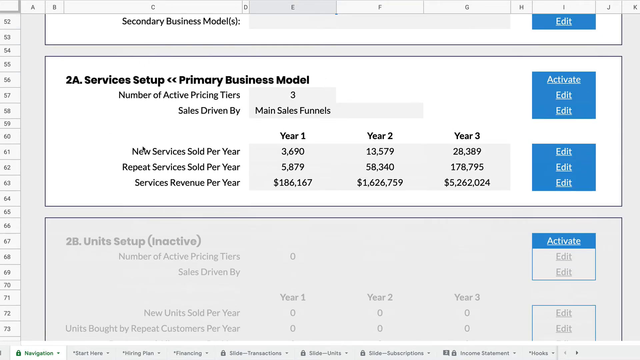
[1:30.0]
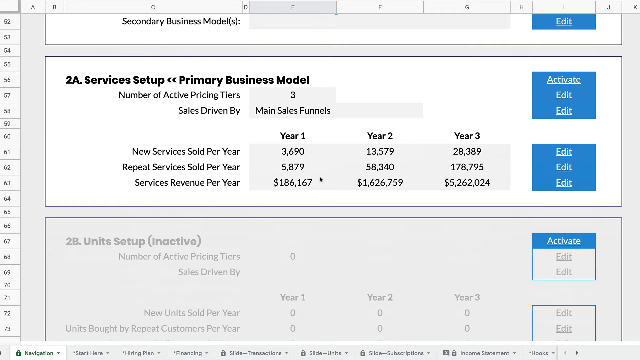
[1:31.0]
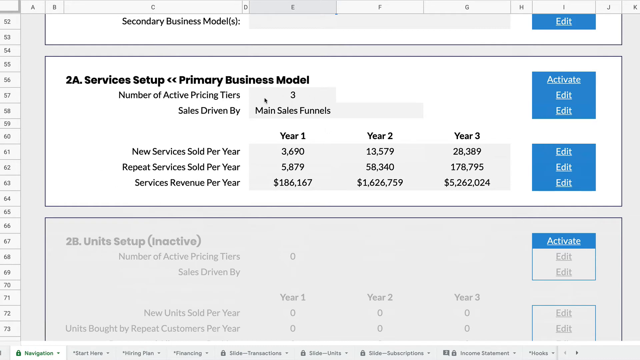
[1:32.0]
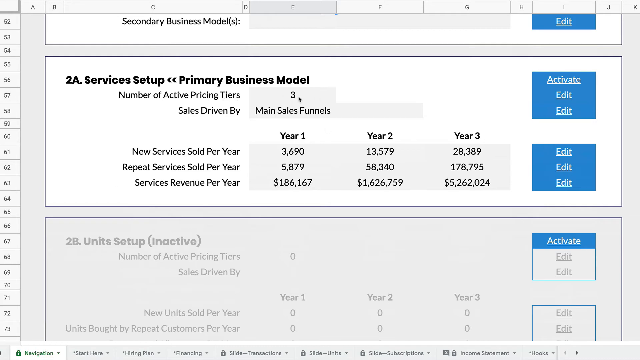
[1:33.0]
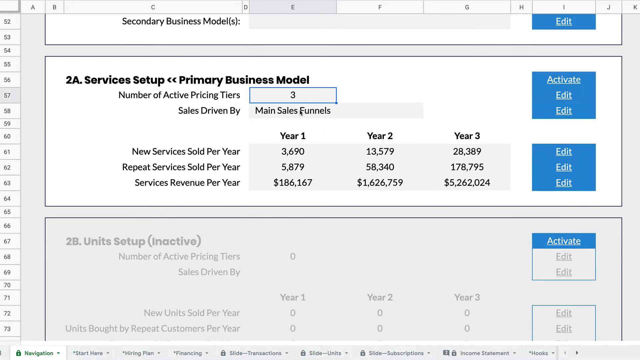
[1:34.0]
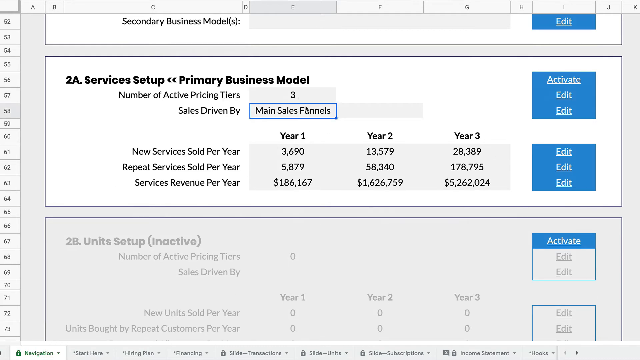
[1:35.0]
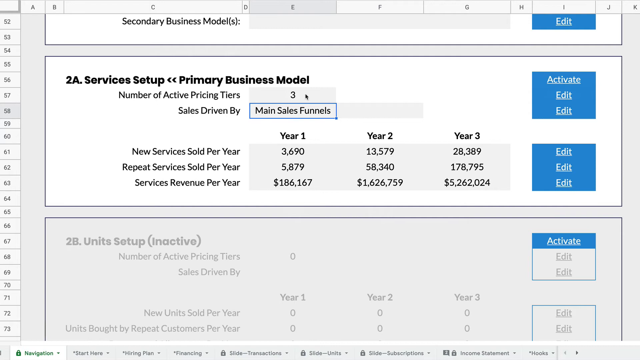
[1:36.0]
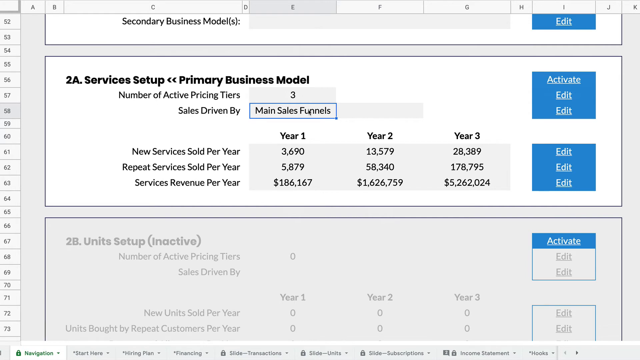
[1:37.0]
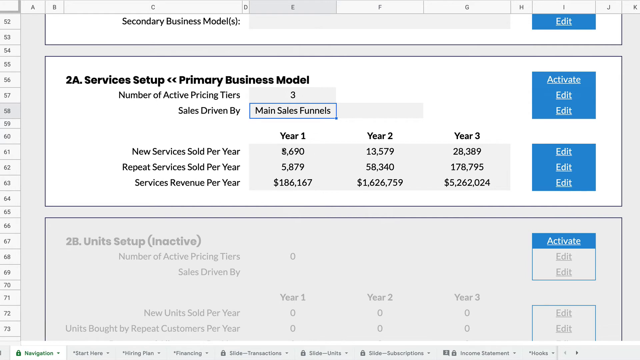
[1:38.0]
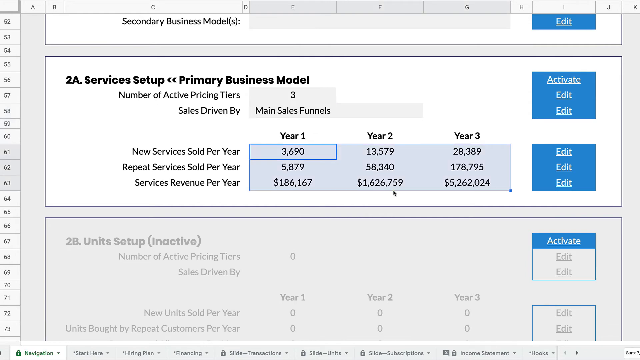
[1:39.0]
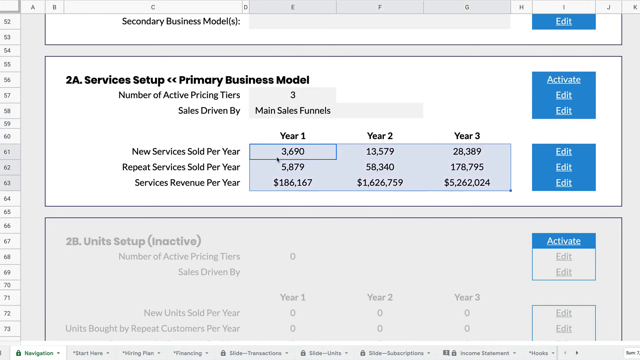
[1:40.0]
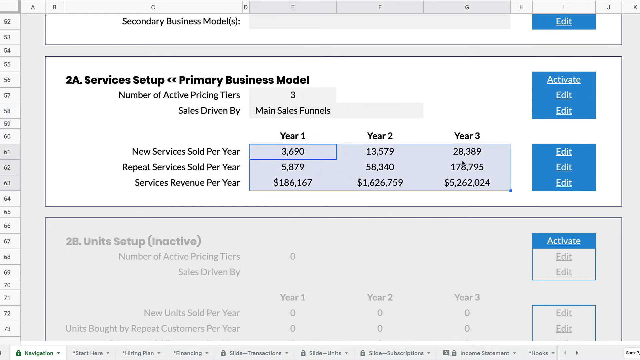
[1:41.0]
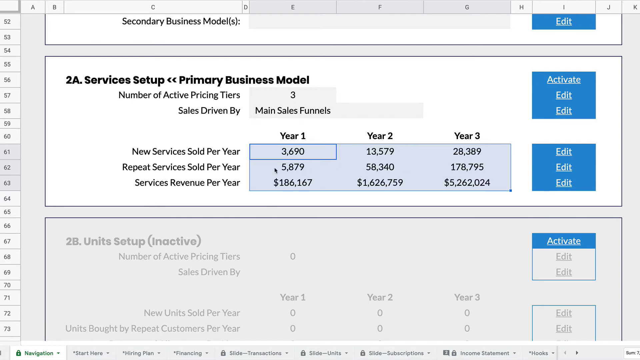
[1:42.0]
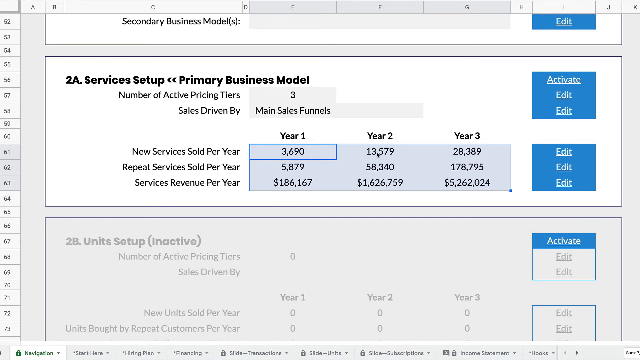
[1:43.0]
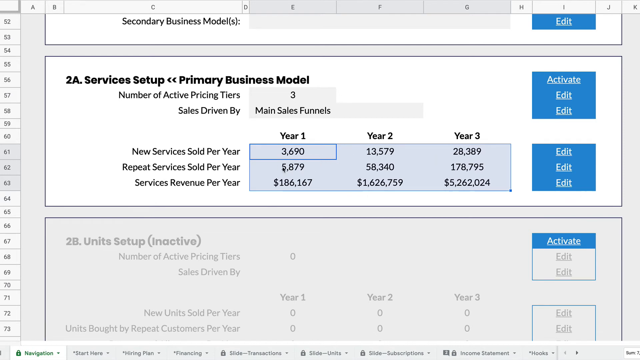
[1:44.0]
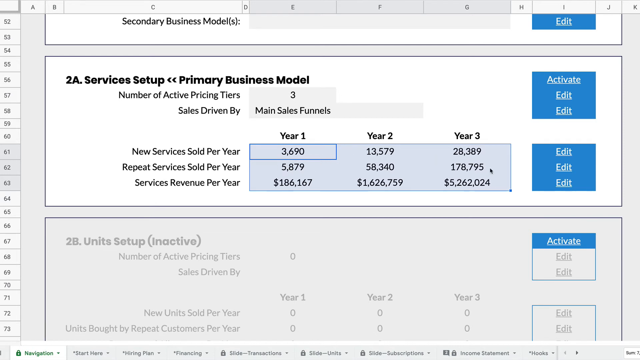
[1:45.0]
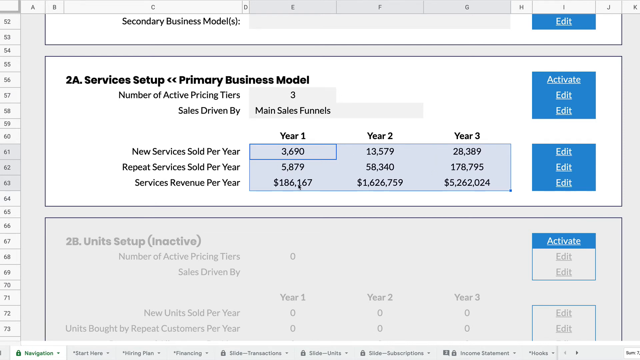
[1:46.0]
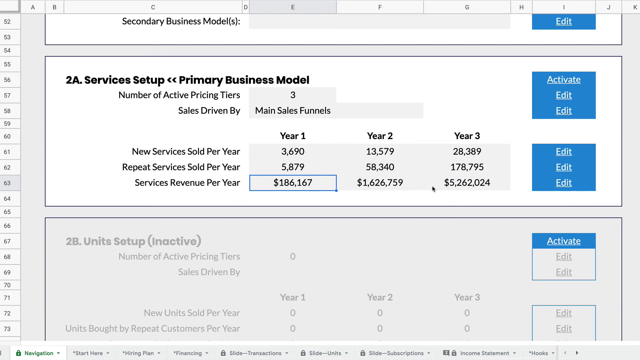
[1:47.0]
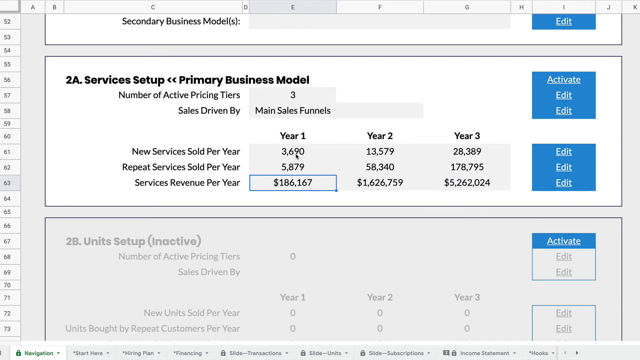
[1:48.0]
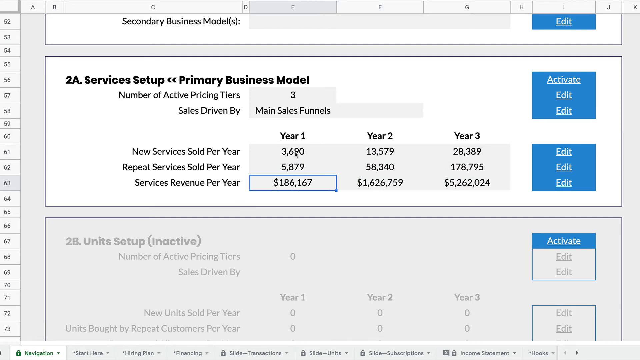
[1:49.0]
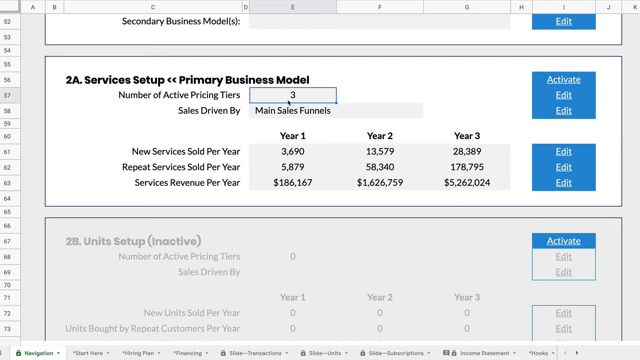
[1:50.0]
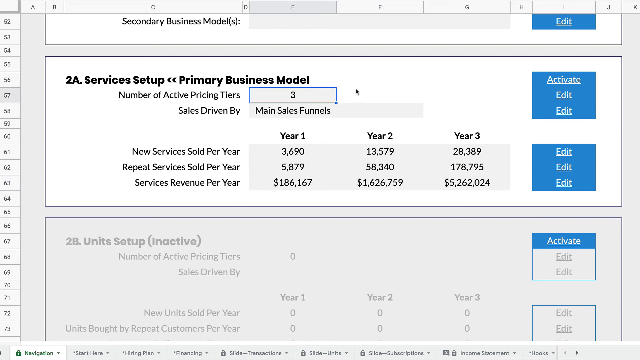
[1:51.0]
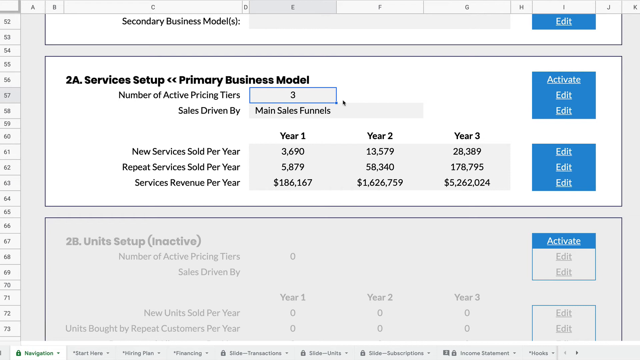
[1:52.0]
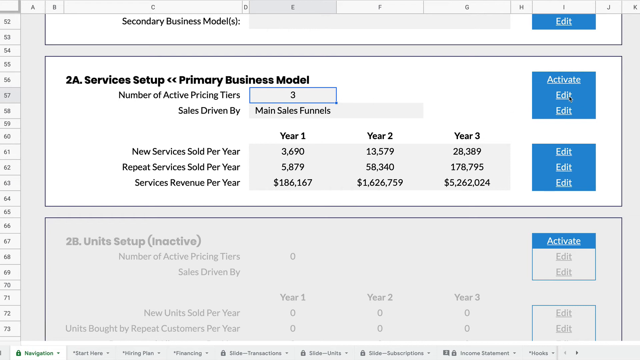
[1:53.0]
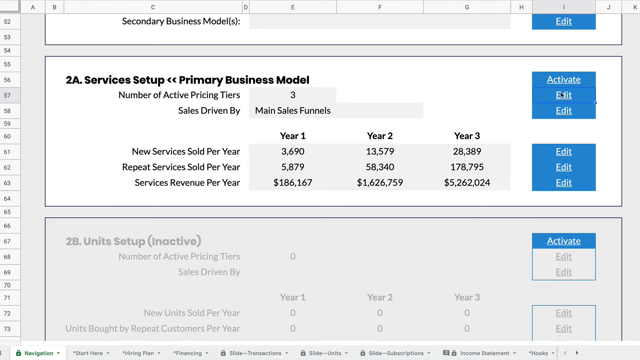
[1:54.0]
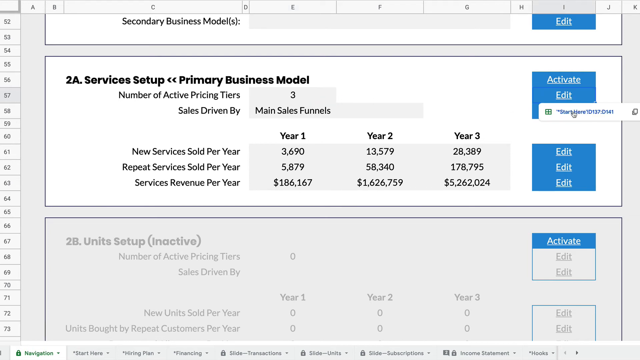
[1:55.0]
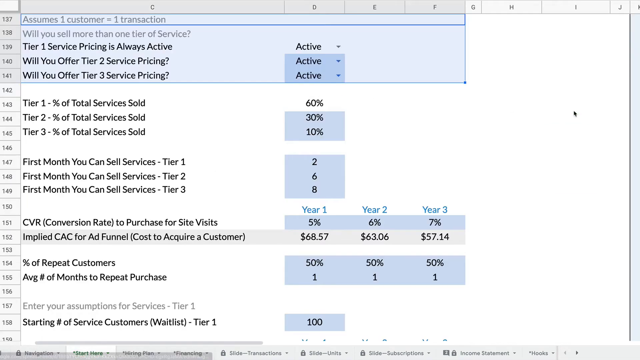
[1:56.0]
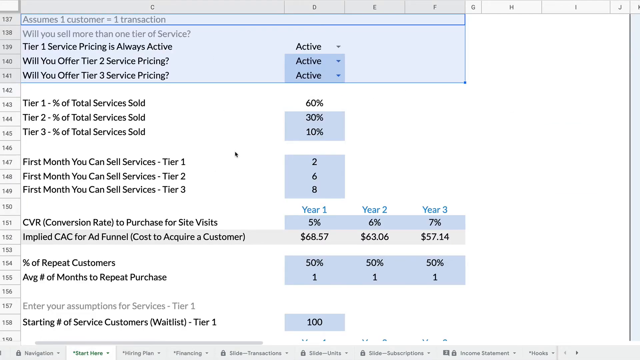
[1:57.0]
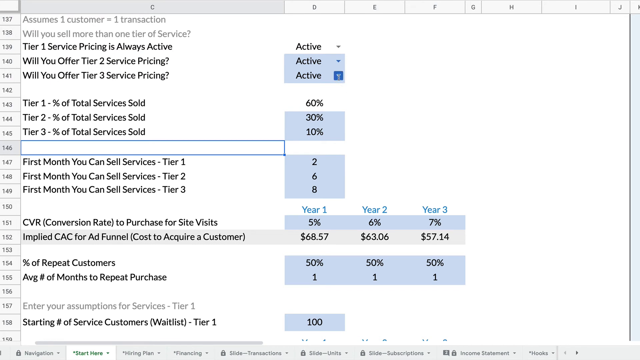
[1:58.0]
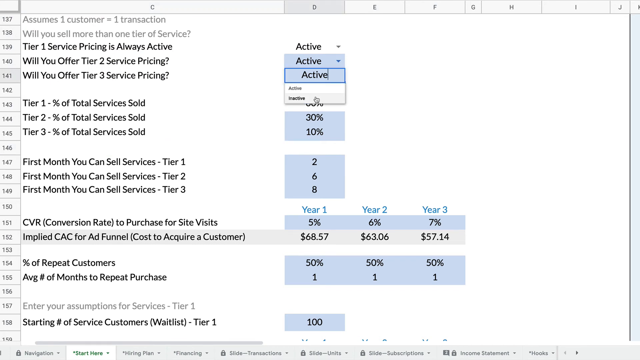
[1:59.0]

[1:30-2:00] On Services Setup, Primary Business Model, the man clicks on three, then on Sales Driven By, then on the various year options, scrolling through price points that differ per year. He goes back up to Active Pricing, clicks the Edit button labeled Start Here, and a different page opens showing "Tier 1 Service Pricing is always active," with dropdown menus on the side marked Active, and the questions "Will you offer Tier 2 Service Pricing?" and "Will you offer Tier 3?" Percent of total services sold reads 60 for Tier 1, 30 for Tier 2, and 10 for Tier 3. A row for the first month you can sell services shows values for each tier, with 6 for Tier 2 and 8 for Tier 3. Further down are CVR, conversion rate to purchase for site visits, at 5%, 6%, and 7% for years 1, 2, and 3, Applied CAC for Ad Funnel with monetary amounts, and Percent of Repeat Customers at 50% for all years, among many other options.